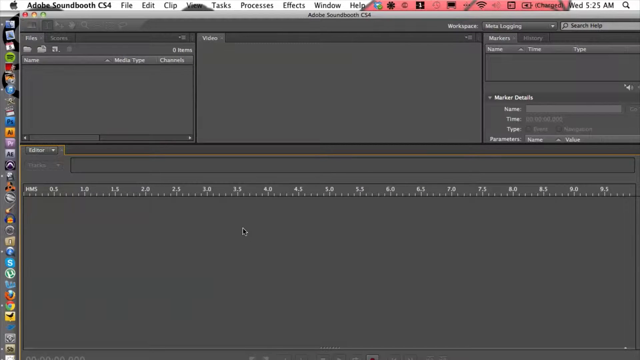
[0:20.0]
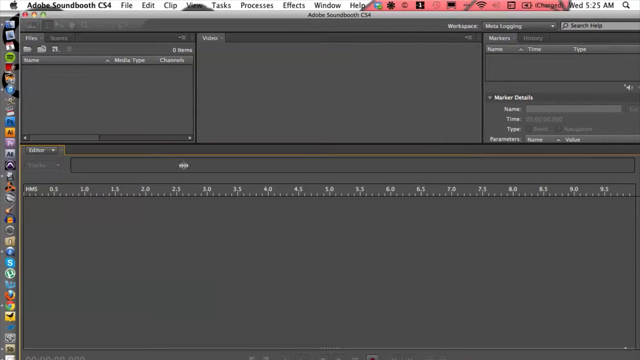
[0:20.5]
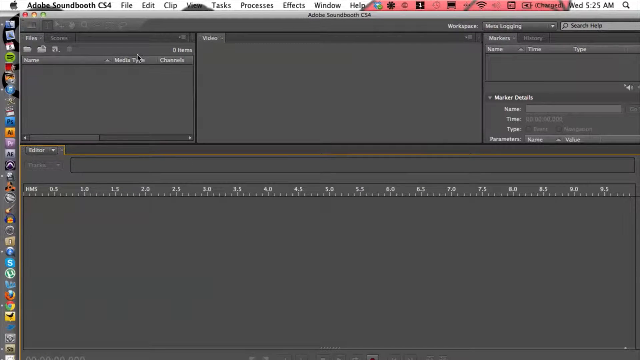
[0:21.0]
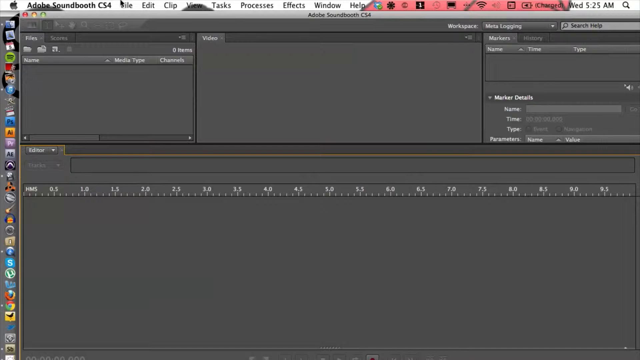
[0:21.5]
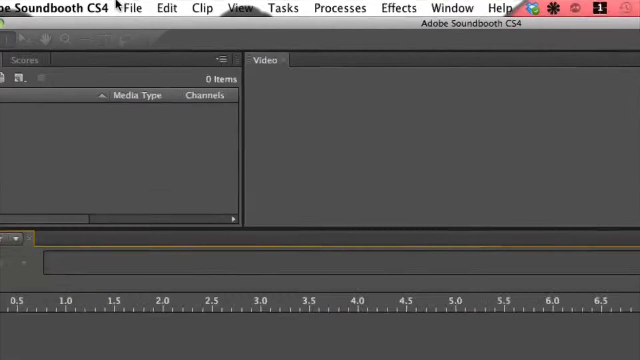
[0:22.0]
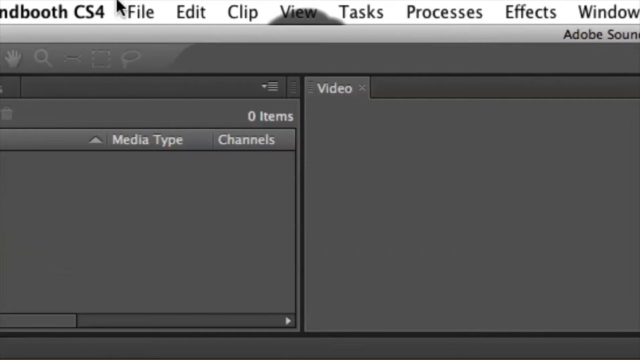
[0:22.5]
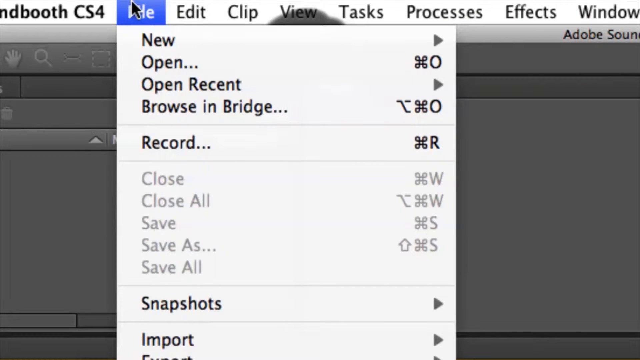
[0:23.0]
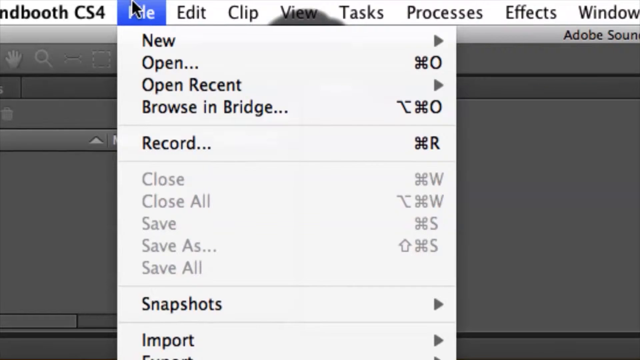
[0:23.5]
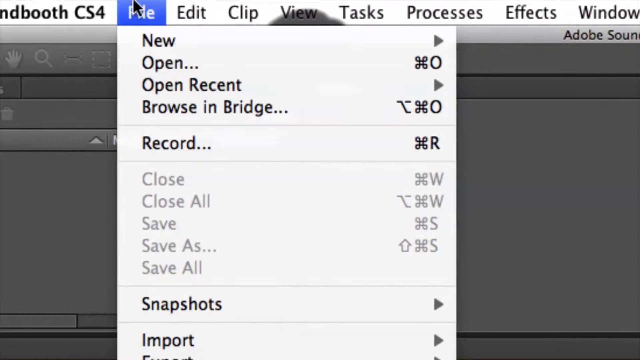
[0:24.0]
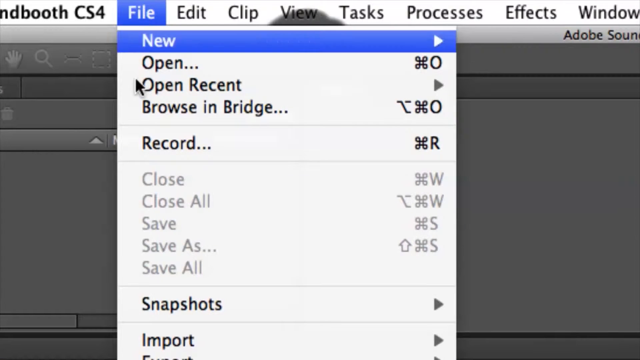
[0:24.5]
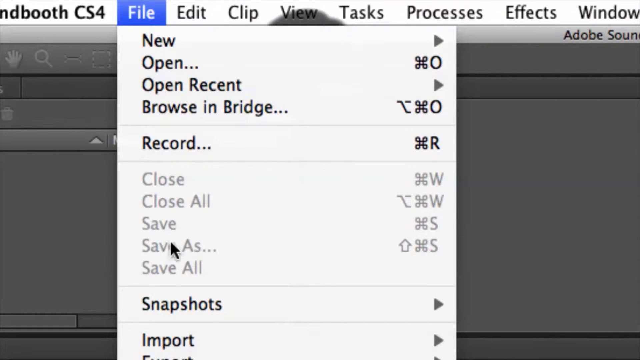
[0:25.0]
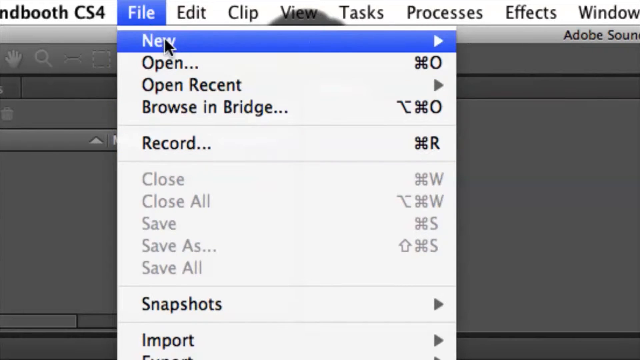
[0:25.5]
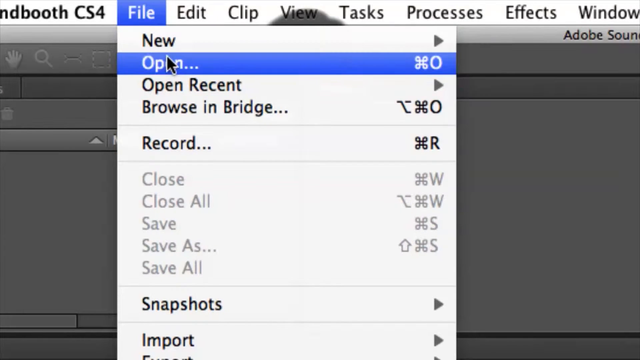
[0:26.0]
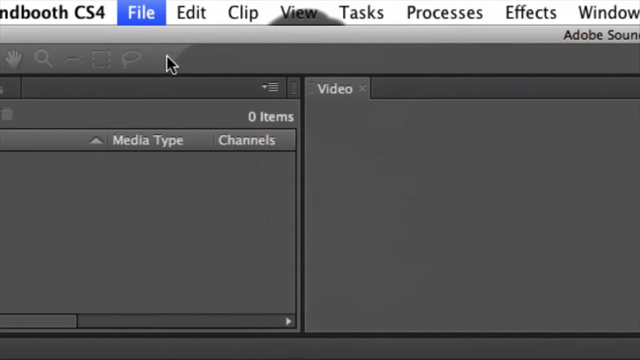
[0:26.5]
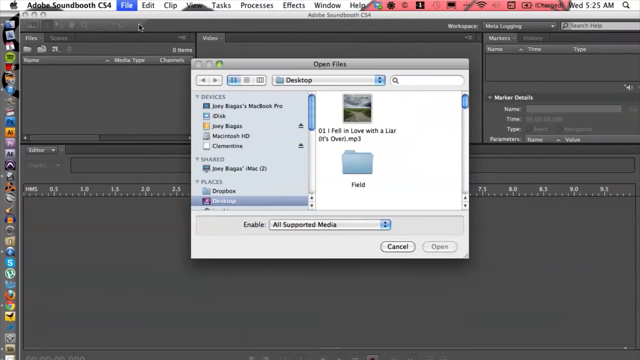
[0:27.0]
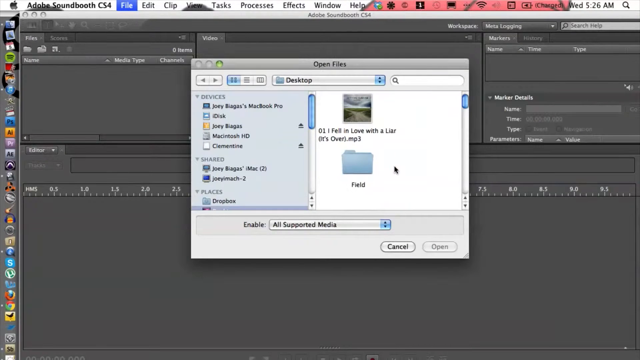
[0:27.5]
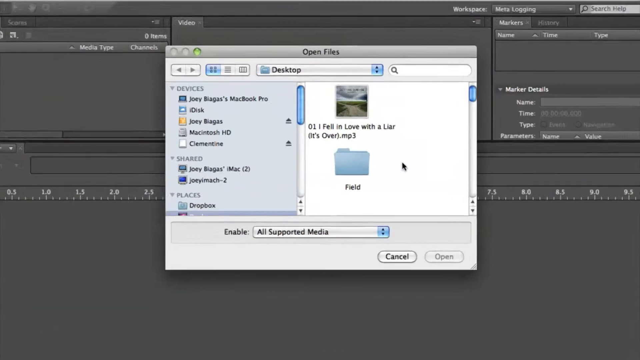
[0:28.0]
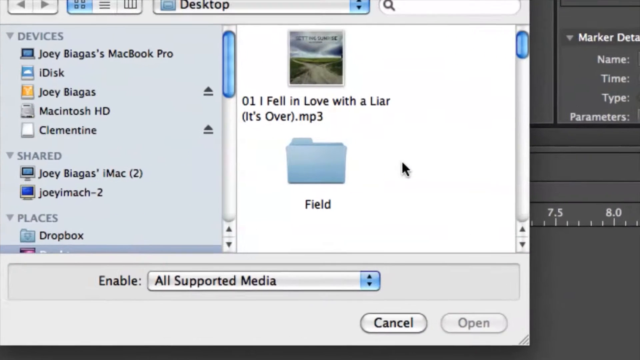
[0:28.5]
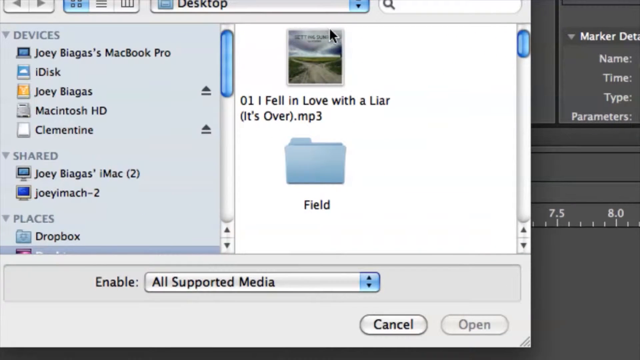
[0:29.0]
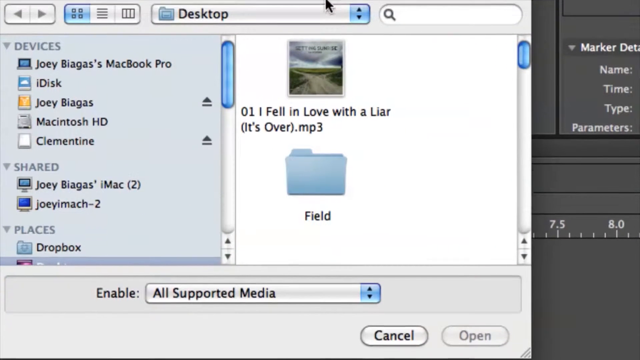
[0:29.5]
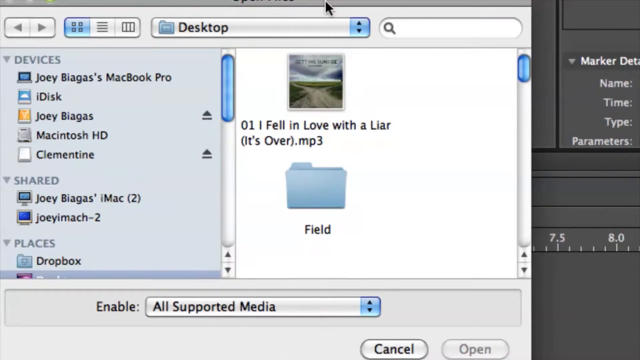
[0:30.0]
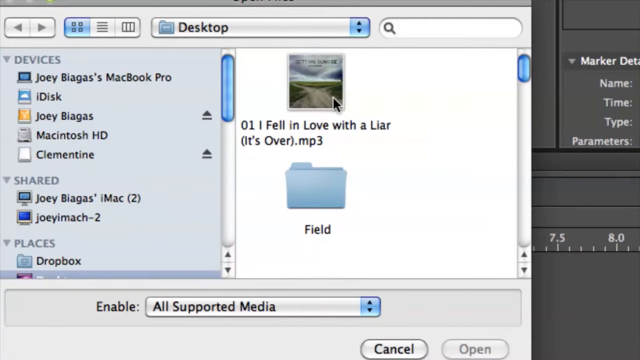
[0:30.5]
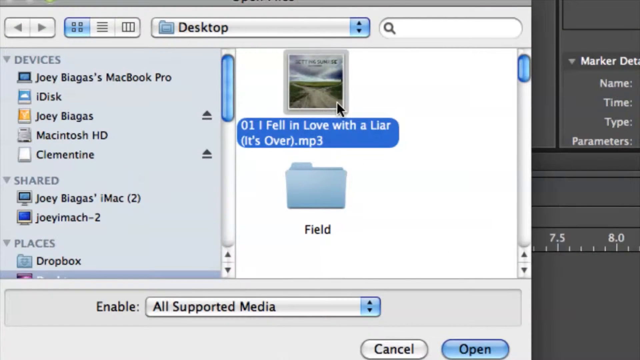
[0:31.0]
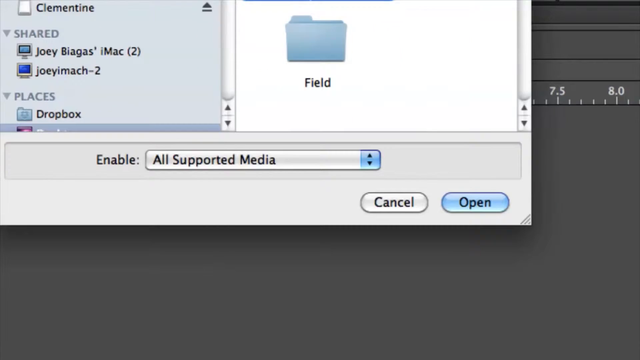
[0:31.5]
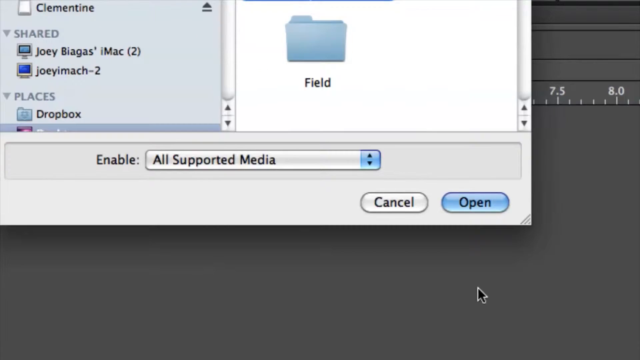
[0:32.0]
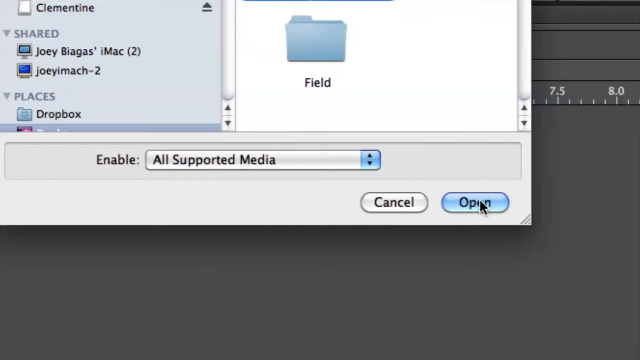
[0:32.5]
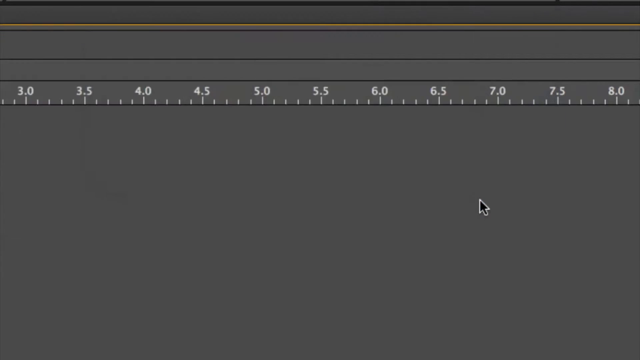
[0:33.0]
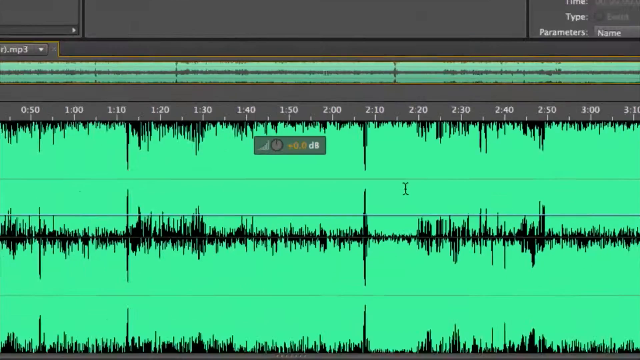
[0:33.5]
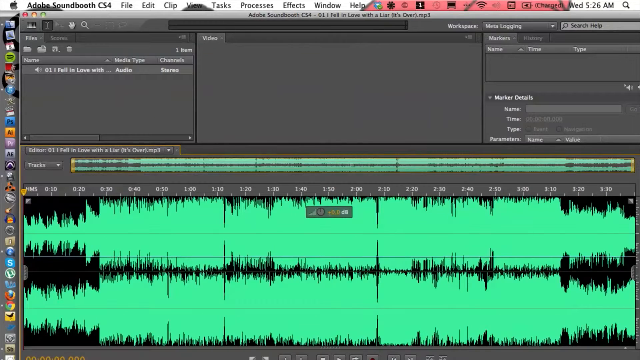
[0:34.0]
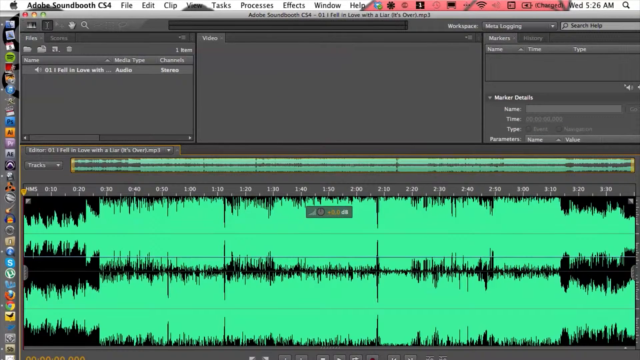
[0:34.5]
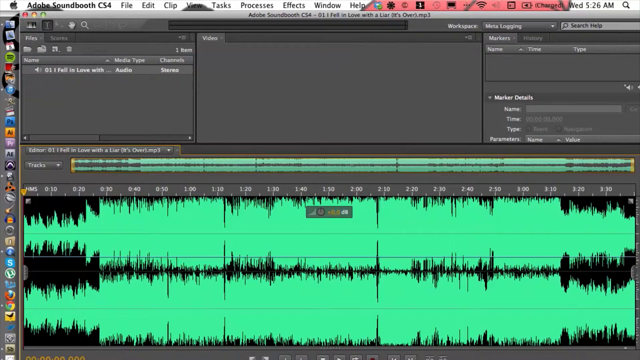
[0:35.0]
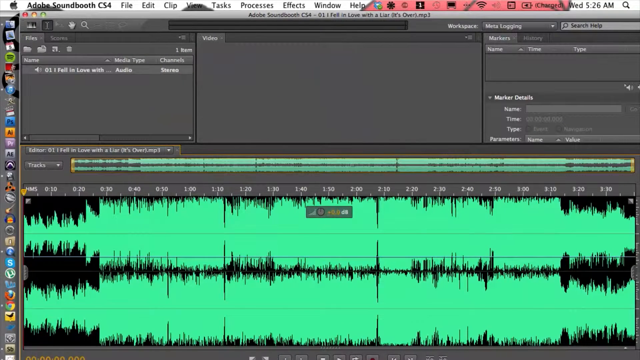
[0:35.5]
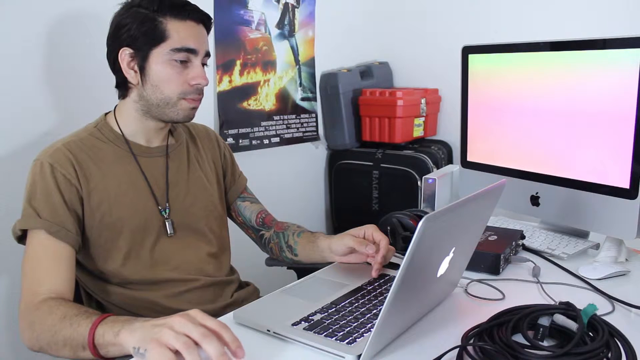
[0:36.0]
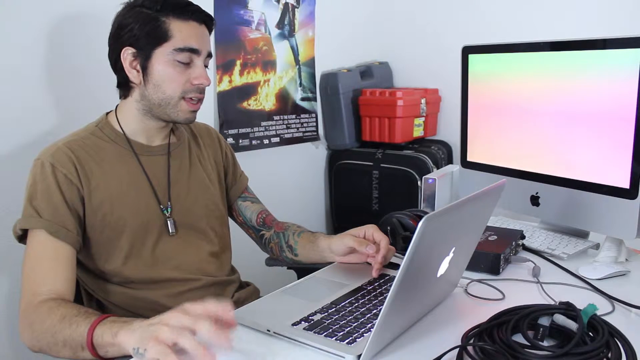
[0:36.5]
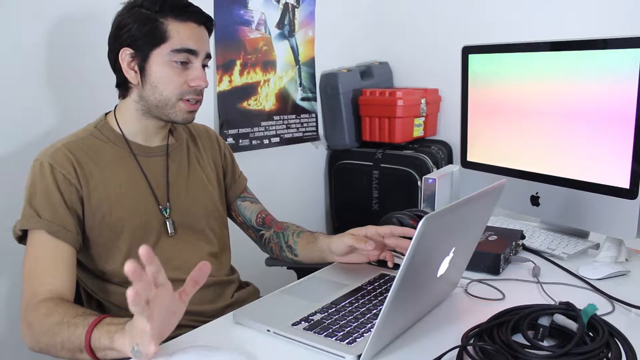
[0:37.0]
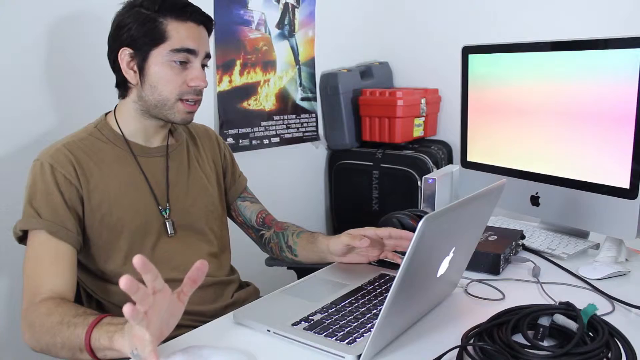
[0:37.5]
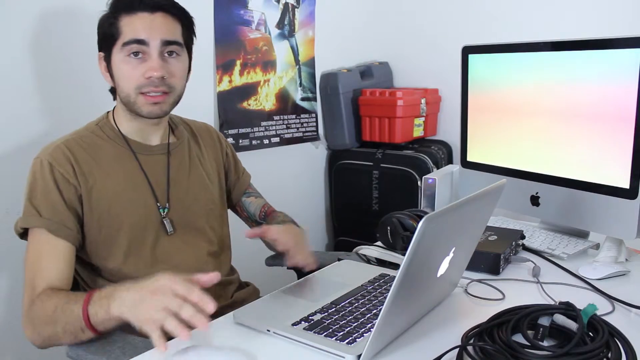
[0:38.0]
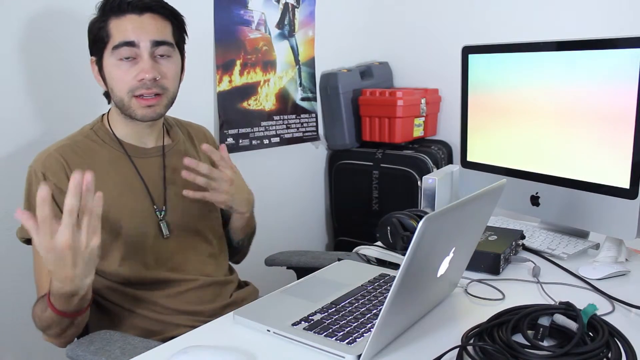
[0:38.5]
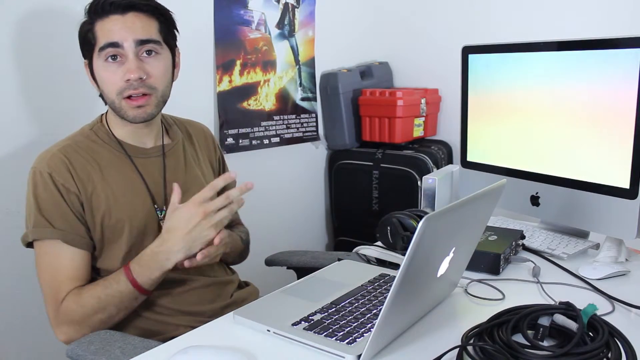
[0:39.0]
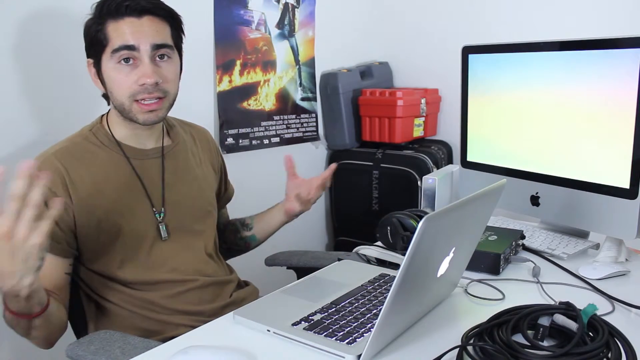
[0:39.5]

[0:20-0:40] A window says "Adobe Soundbooth CS4". The cursor goes up to the top left and the view zooms in closer. The cursor hovers over File, which is clicked and highlighted in blue. The cursor goes down to Record, goes up to New, clicks New, which opens something, and goes down to Open. A window opens in the bottom right and the view zooms out. The open window says "open files". On its left it shows devices: "Joey Villagas MacBook Pro", disk, "Joey Villagas", "Macintosh HD" and "Clementine"; under shared is "Joey Villagas iMac". The cursor moves down to places. To the right it shows "I fell in love with a liar", and the view zooms in on it. He hovers over it, clicks on it and opens it. The window fills up with the audio, shown as kind of like green waves. The view then switches to the man, who gestures with his hands in front of him and, as he turns, looks at the camera.